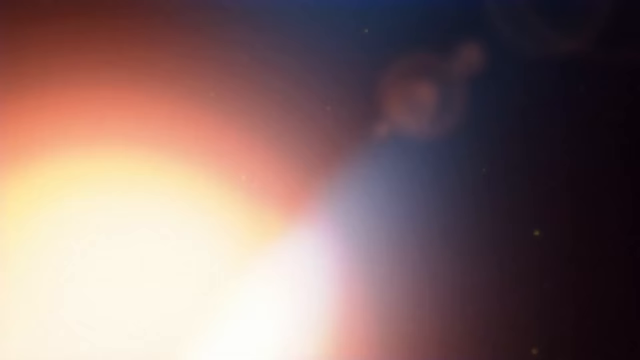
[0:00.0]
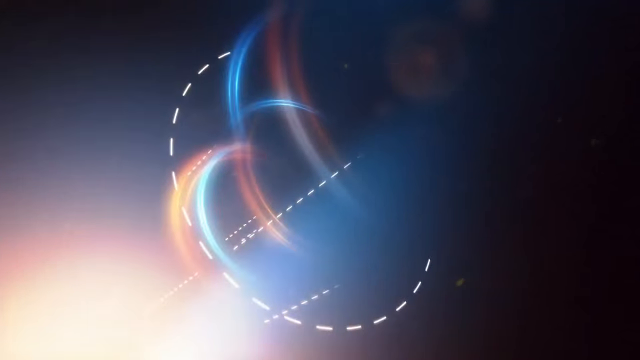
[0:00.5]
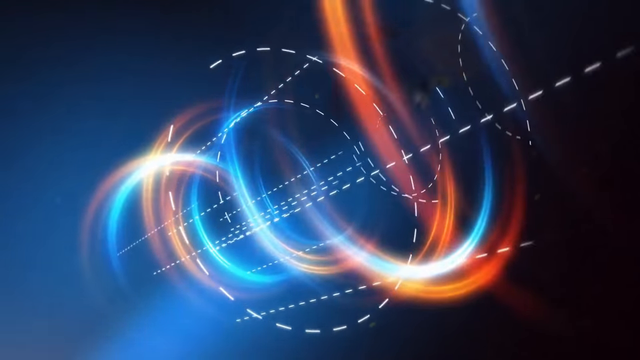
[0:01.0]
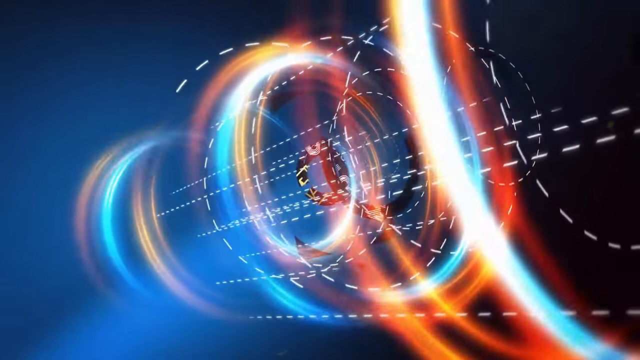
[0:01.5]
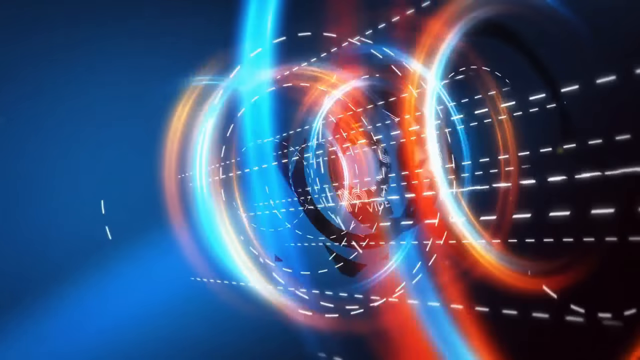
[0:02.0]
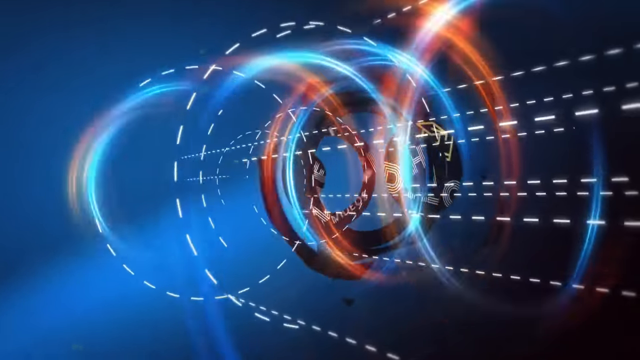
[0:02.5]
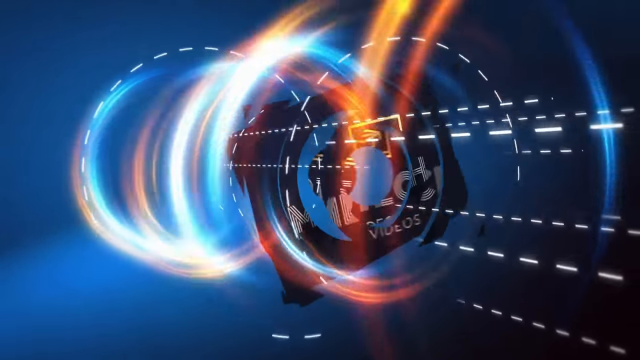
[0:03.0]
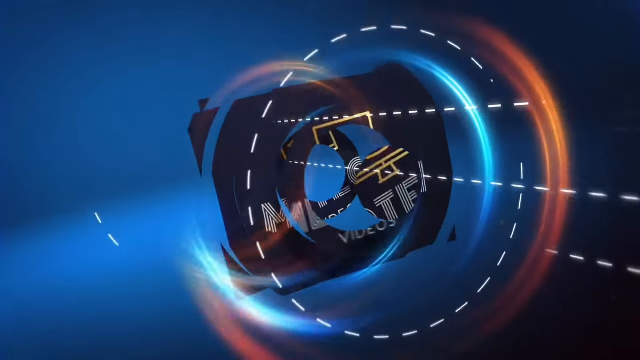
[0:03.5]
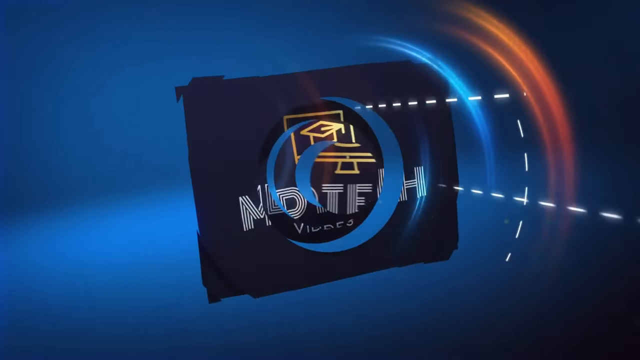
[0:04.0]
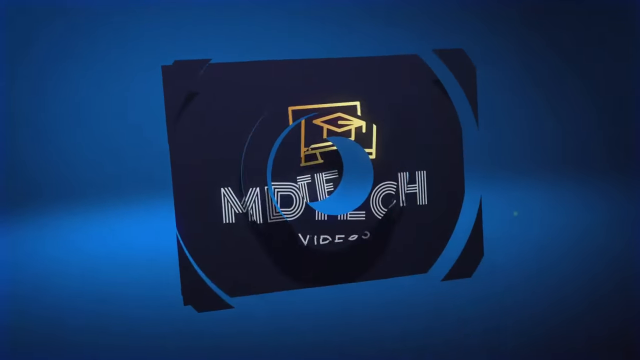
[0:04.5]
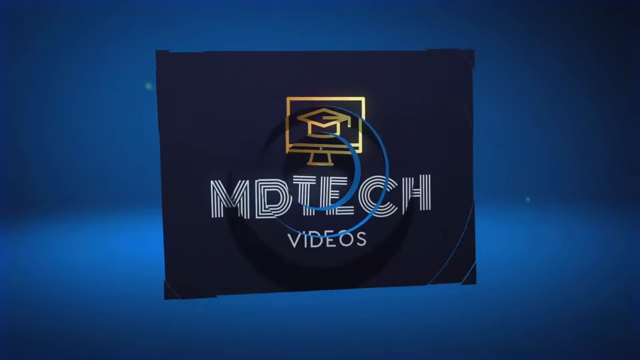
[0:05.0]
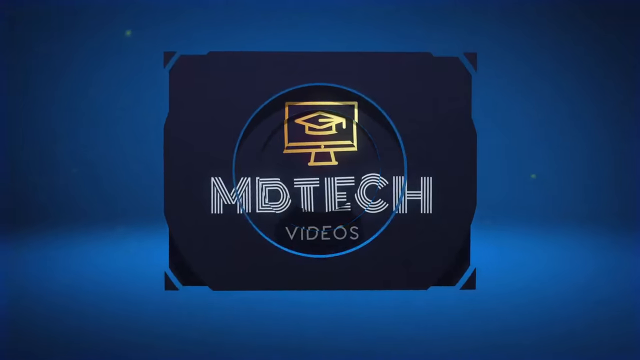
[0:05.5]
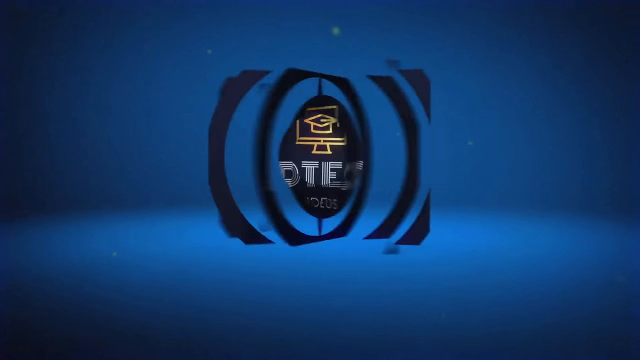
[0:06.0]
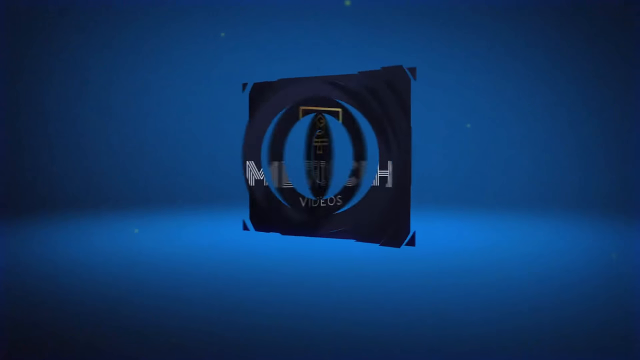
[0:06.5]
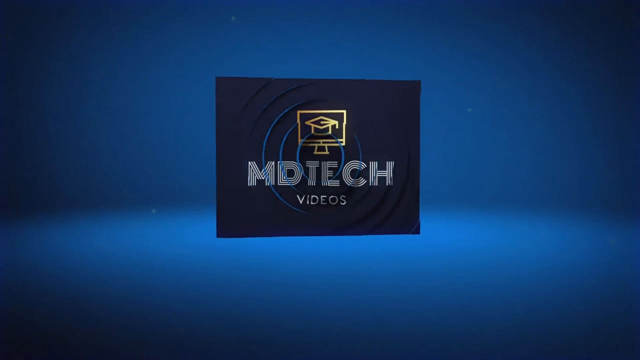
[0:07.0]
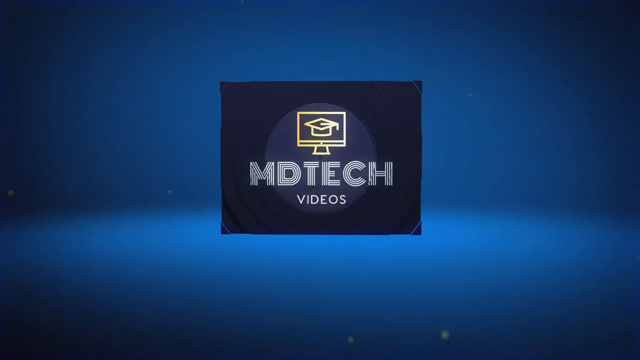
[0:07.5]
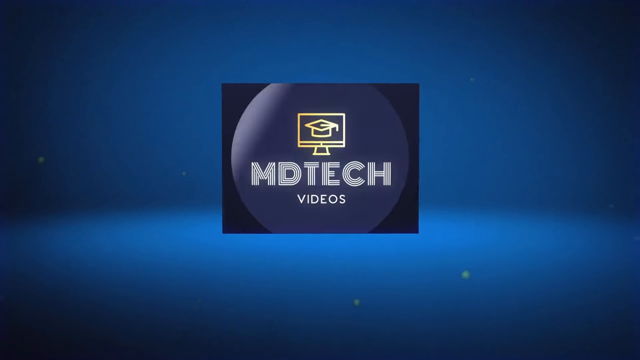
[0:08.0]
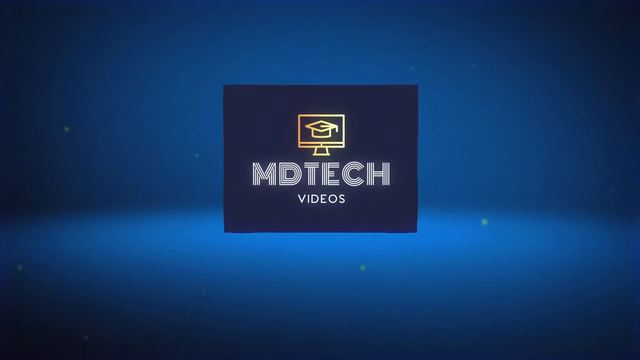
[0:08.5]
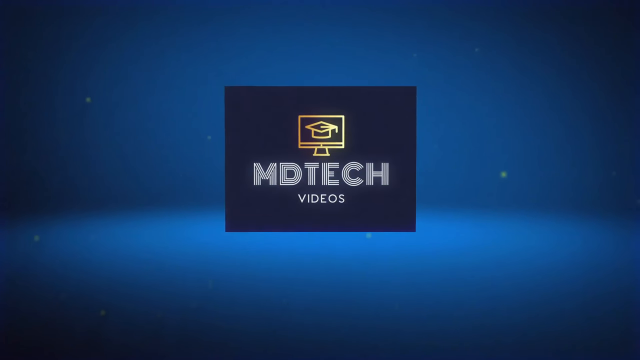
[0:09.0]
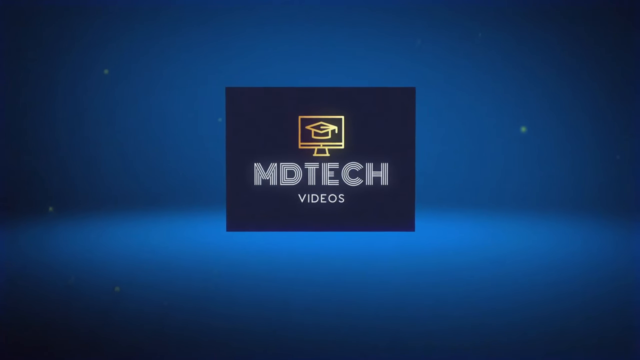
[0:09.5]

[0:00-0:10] A logo made of a group of circles comes on screen with the words "MD Tech Videos." In the center of the screen are many flashing colored lights in green, blue and orange, almost like a wormhole. "MD Tech" is in a square with a gold television superimposed, and the MD text appears to be a kind of silver color. Many white, broken-up lines and flashing colors fill out the animation, which looks almost space-like and futuristic. The words "MD Tech Videos" disappear and reappear as the animation continues.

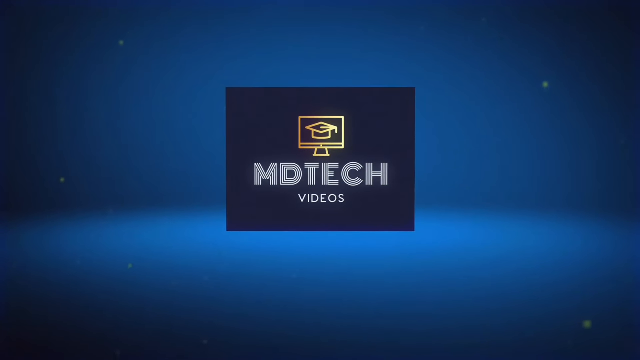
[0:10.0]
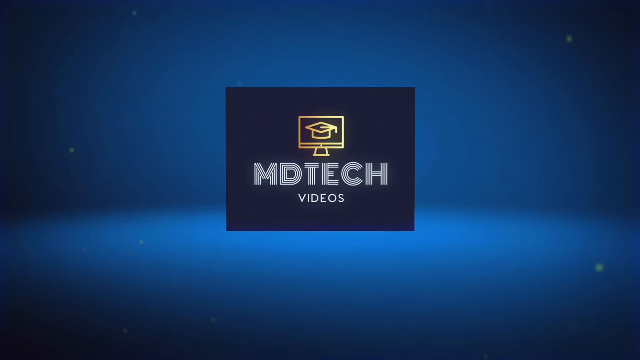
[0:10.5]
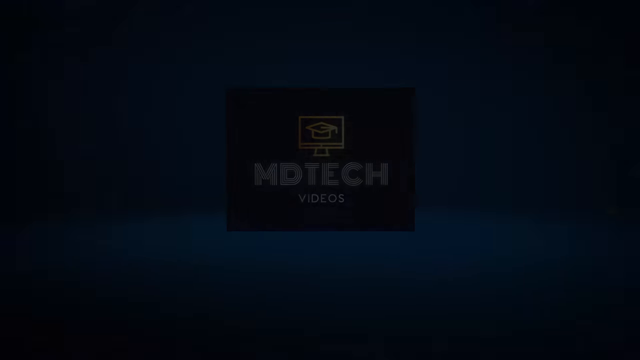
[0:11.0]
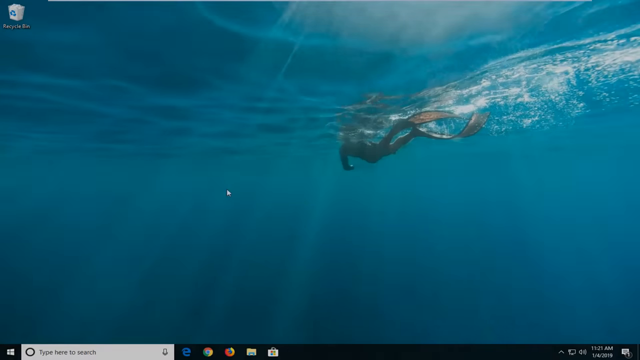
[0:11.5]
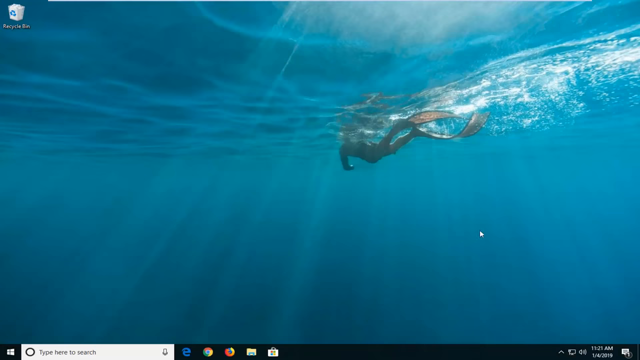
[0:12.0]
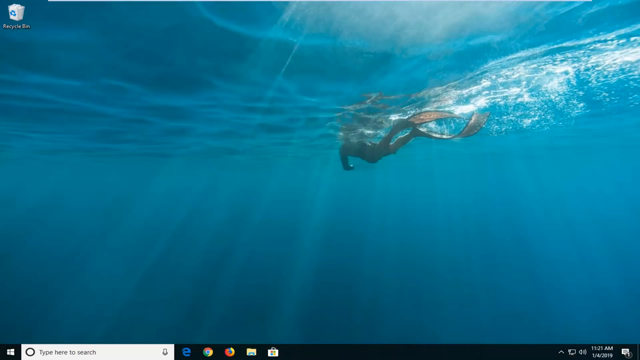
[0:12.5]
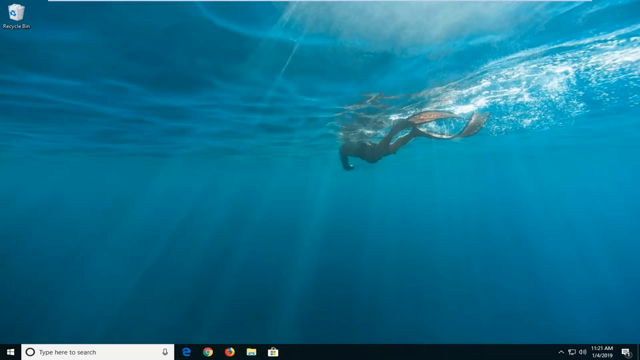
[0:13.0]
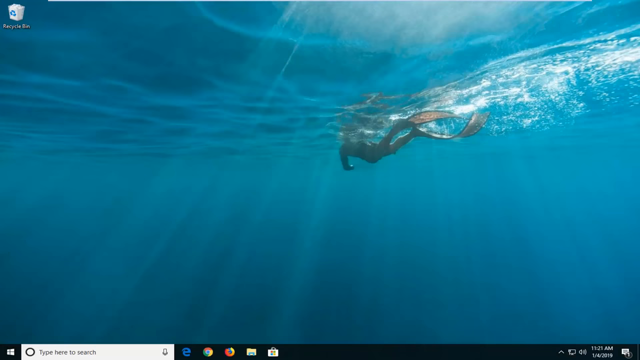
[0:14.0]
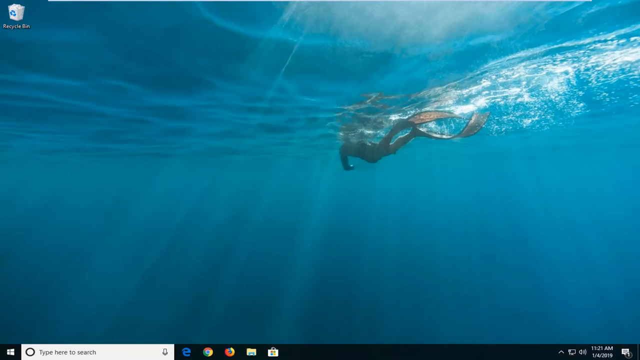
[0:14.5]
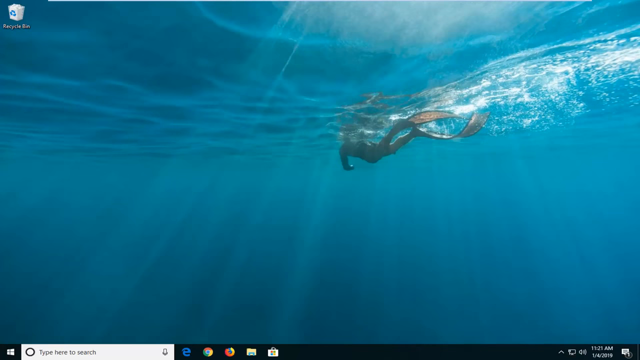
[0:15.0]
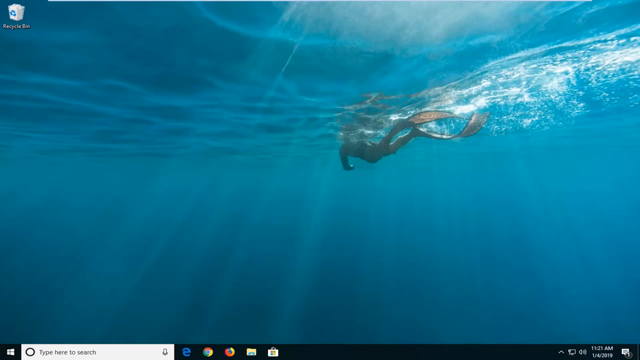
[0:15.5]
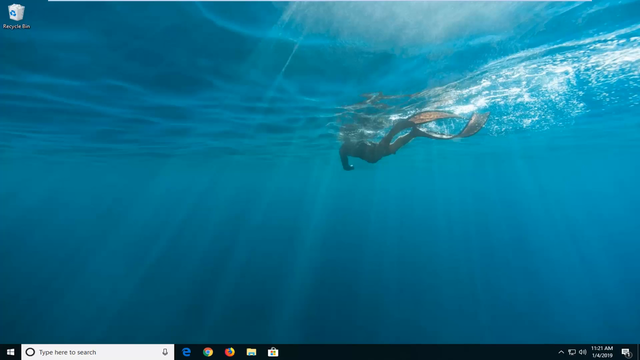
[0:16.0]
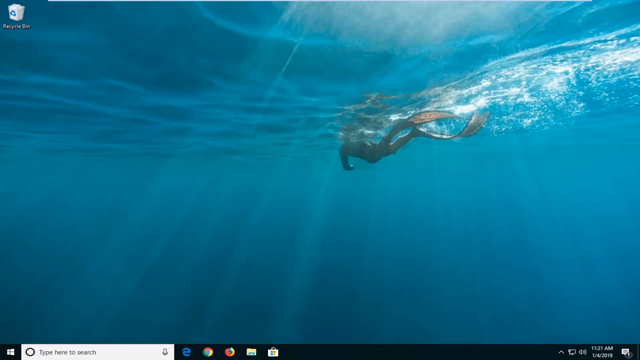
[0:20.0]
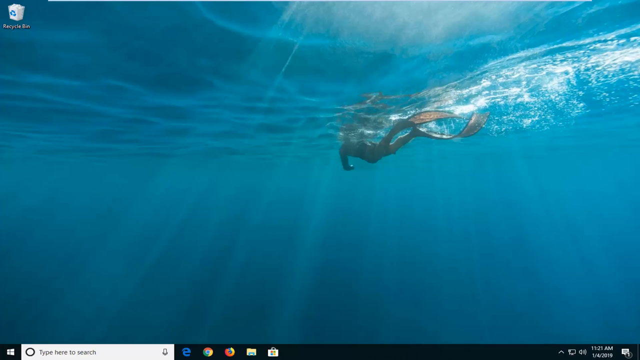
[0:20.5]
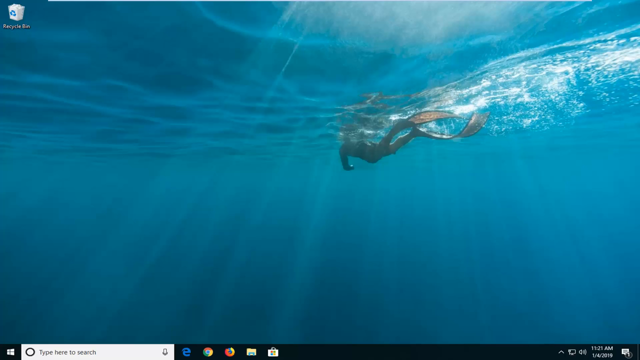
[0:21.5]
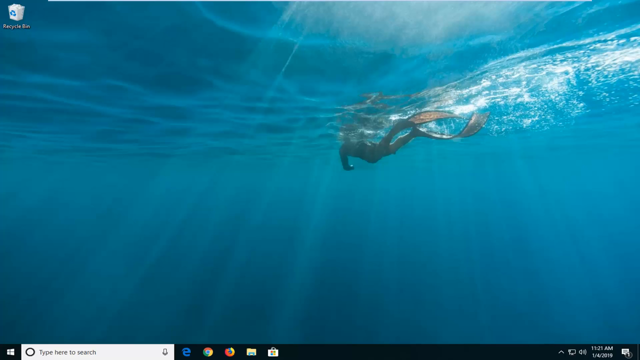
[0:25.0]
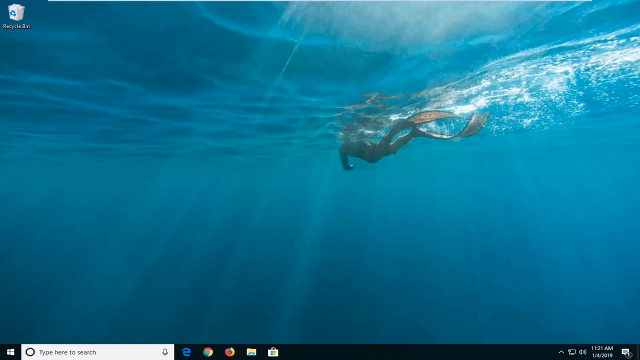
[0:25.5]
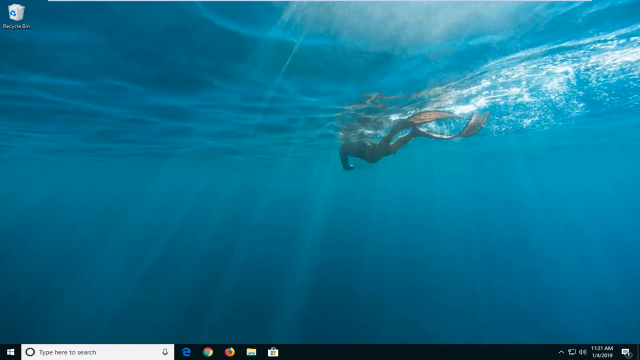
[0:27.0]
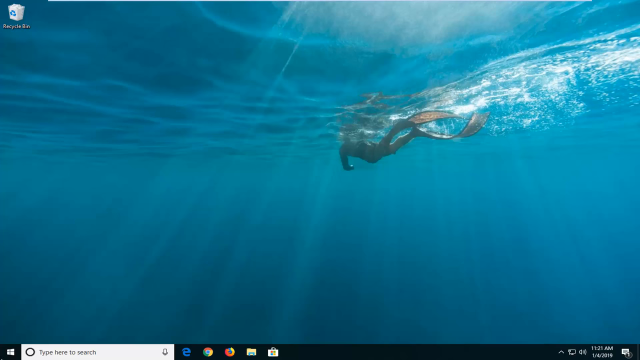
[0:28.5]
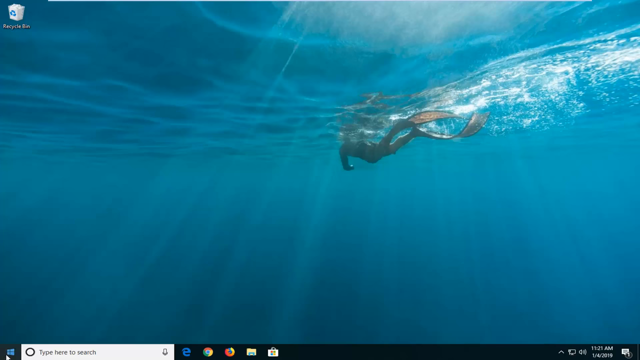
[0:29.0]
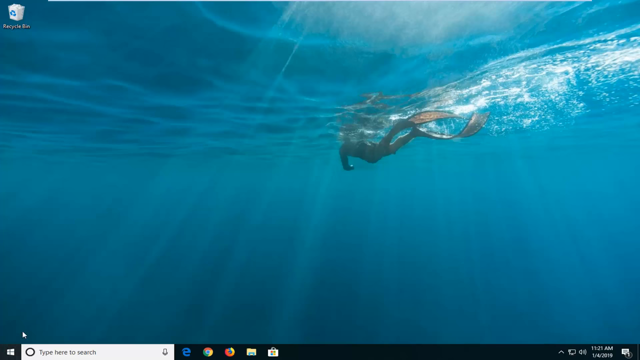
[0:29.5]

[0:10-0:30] An image shows the ocean from an underneath perspective, in a typical turquoise ocean color, with rays of light coming through and down into the sea. Something purple with fins appears to be there: a person swimming, with most of their body visible, leaving a trace of bubbles behind them. The fins are a pinkish color, maybe yellow, and are hit with a lot of light. It is a still image. It looks like a screenshot of someone's computer screen: the Recycle Bin is in the top left, and there are icons below it, including Google Chrome and some file folders.